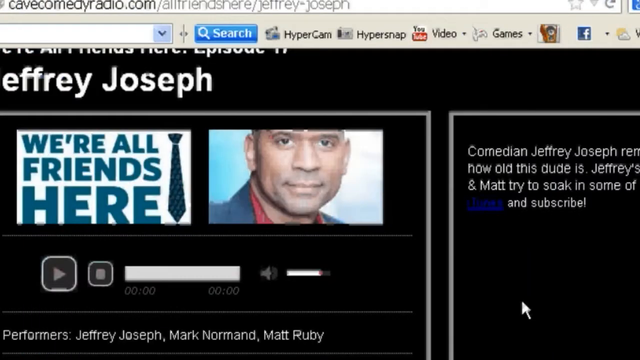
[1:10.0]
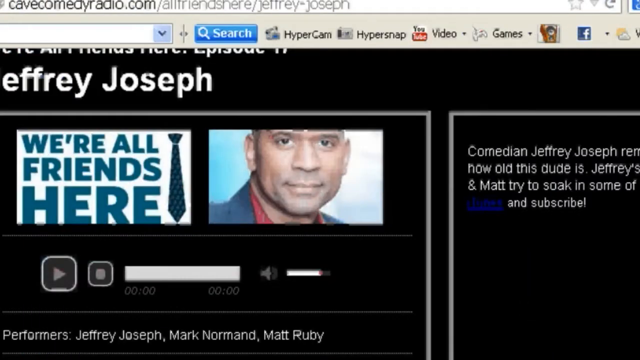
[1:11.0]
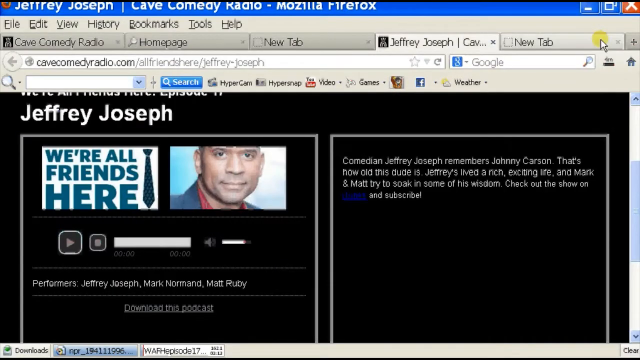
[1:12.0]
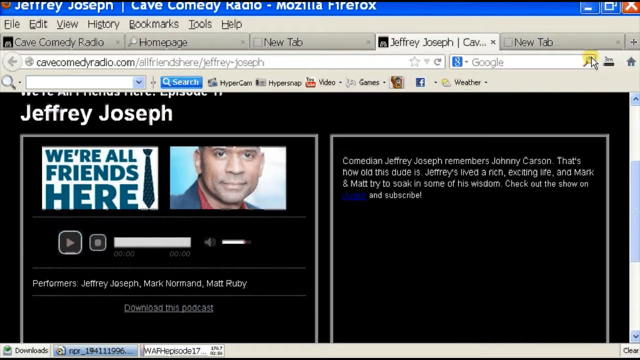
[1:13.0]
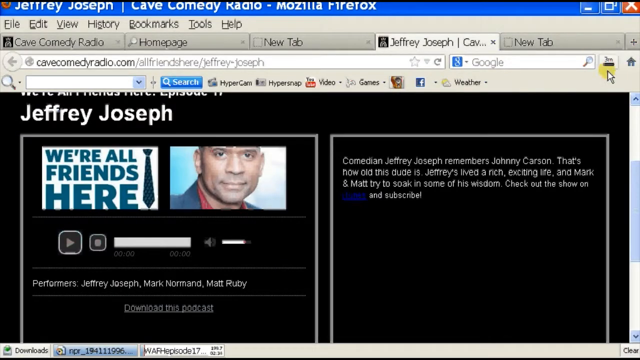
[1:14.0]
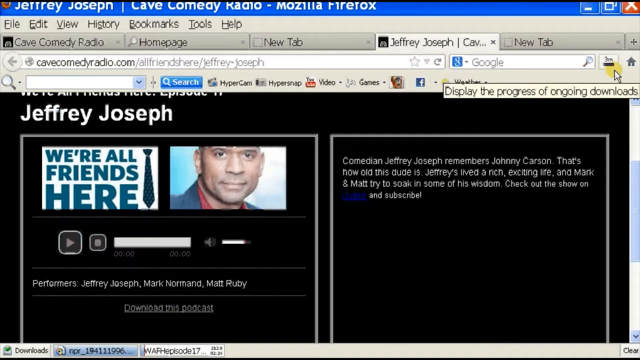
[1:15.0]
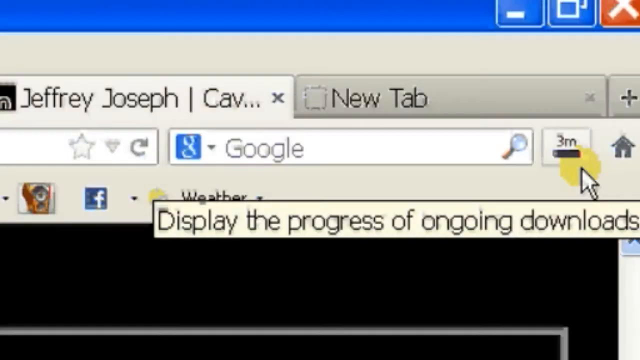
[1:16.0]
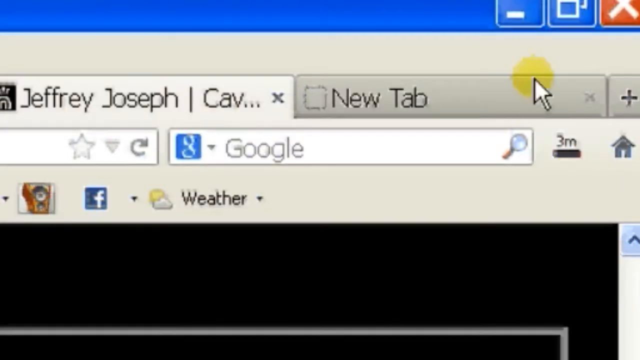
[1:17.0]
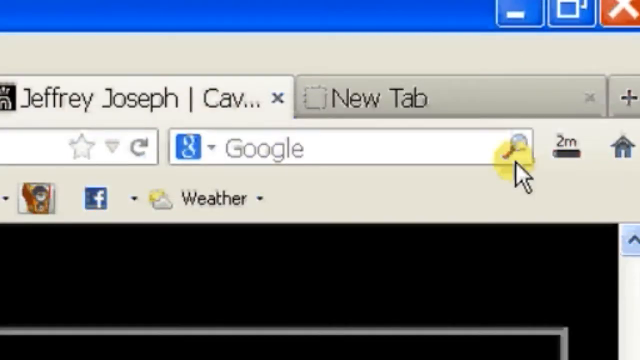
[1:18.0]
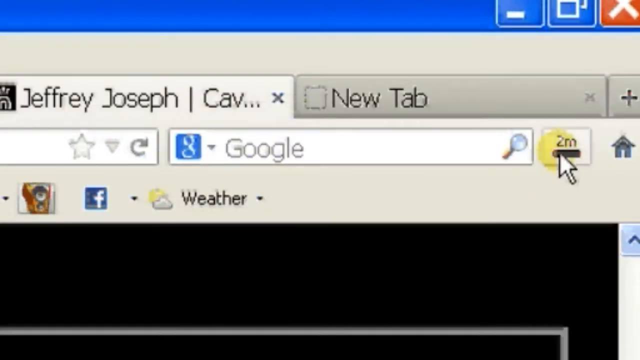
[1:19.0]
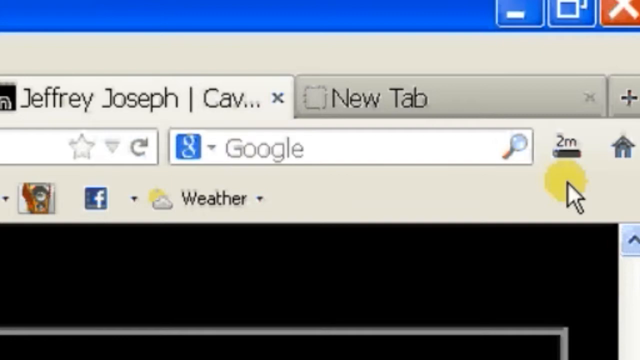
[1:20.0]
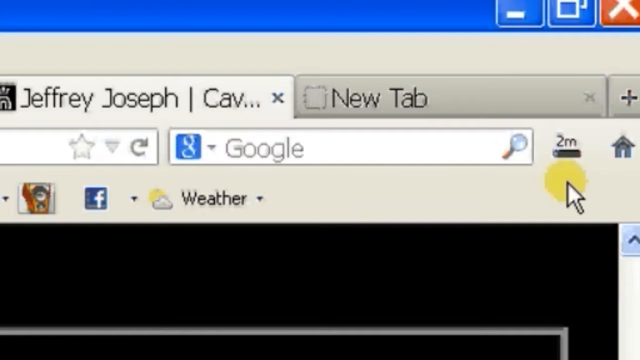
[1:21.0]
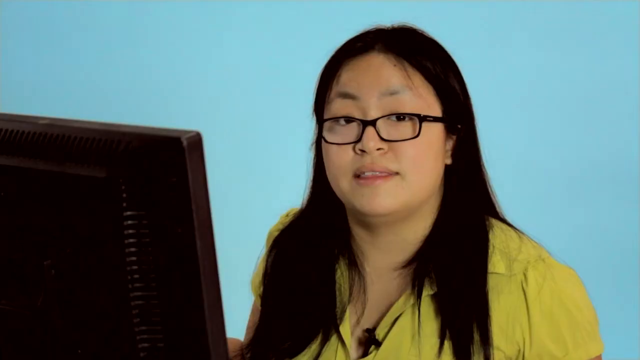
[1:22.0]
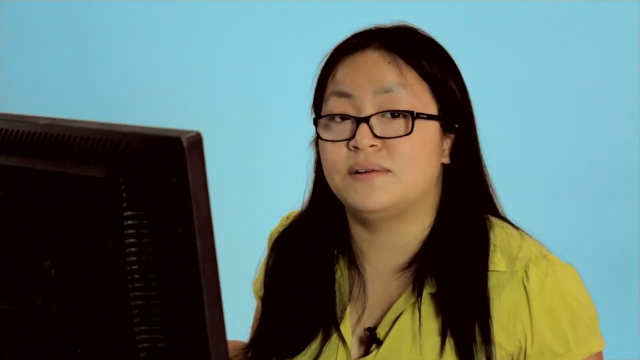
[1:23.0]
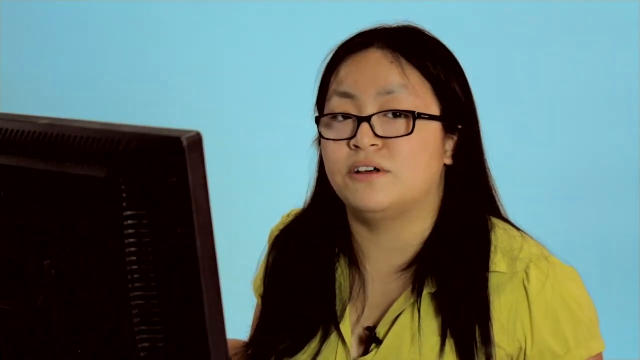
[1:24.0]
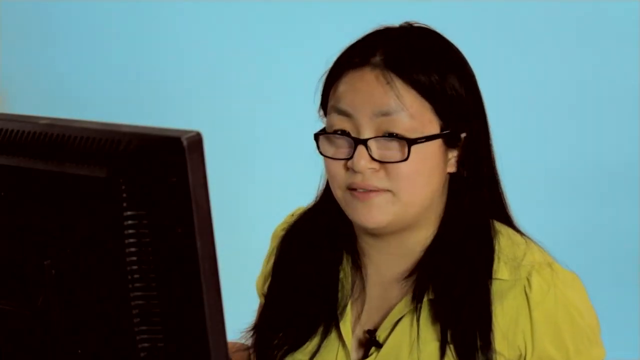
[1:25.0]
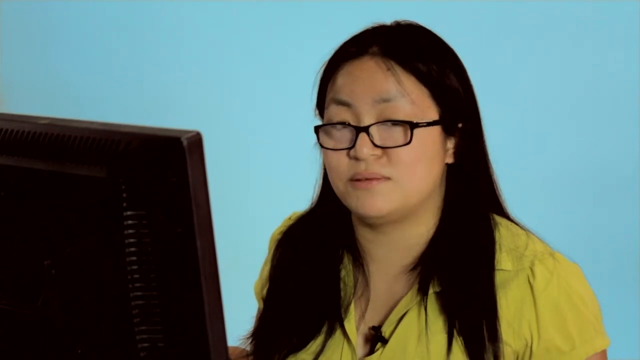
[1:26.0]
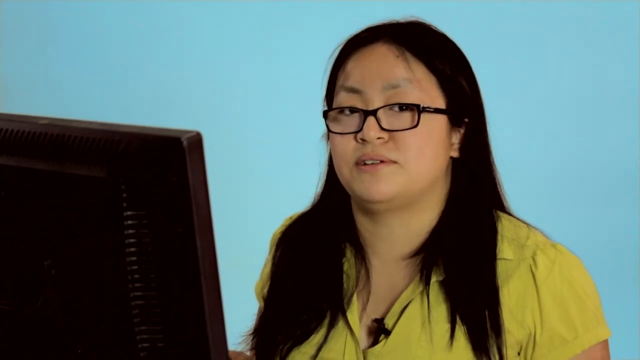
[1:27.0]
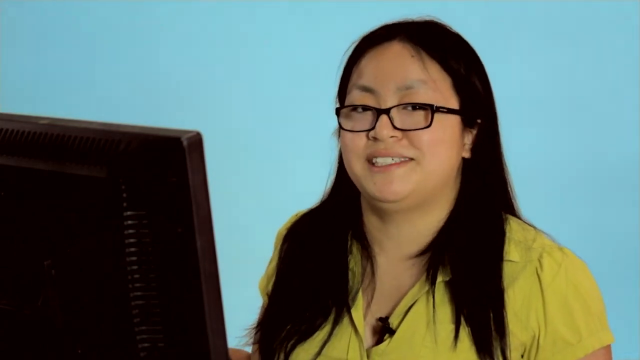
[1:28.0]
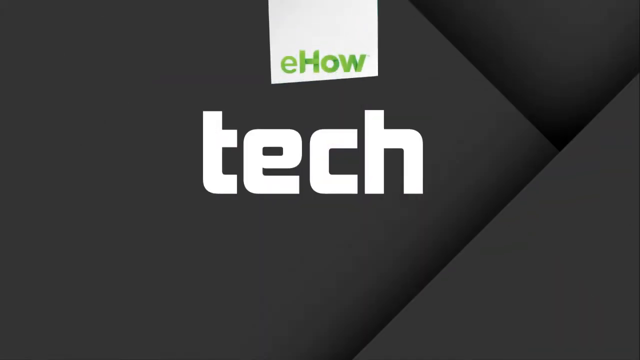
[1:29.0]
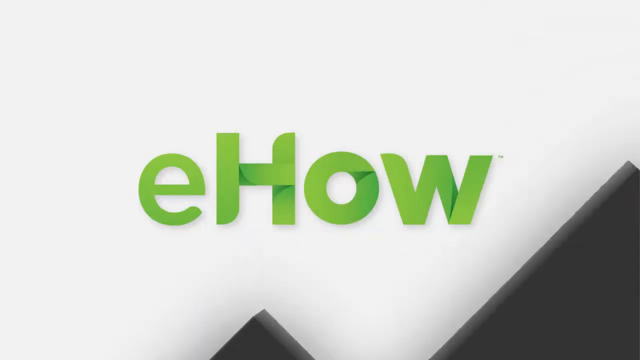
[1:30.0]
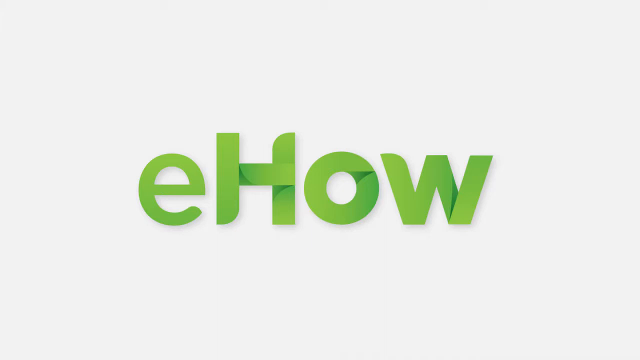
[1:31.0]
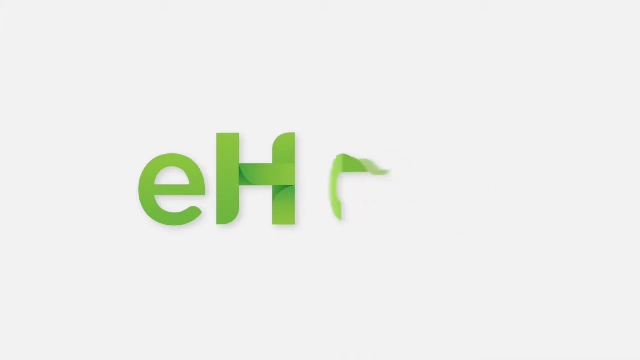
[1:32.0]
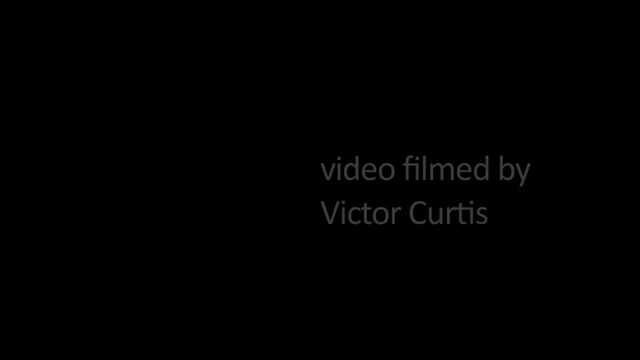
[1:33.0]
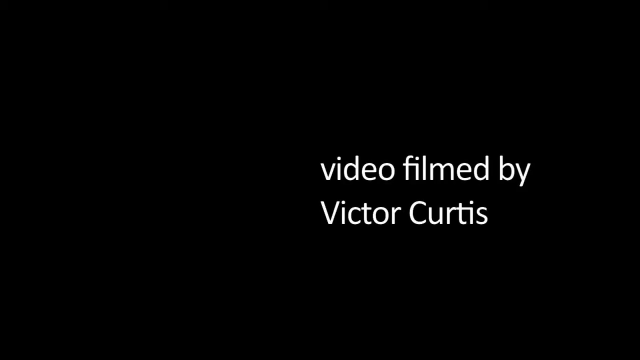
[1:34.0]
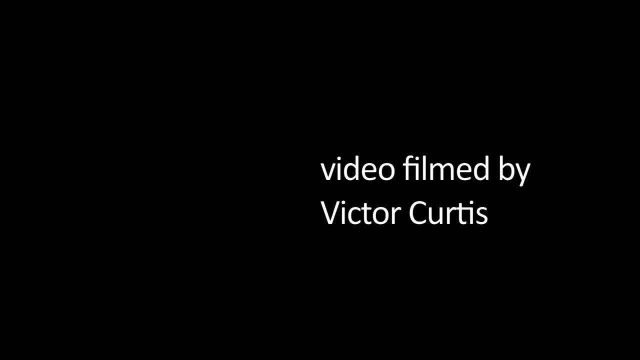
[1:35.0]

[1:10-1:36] The Jeffrey Joseph website, apparently for a comedian, is on screen, and the podcast has been downloaded or started downloading after download and save were clicked. In the upper right-hand corner, it shows two minutes left on saving the file. The video then returns to the live video of the web developer, who looks to be of Asian descent, with long black hair past her shoulders, a green shirt and black glasses, sitting in front of a computer. It then goes to an advertisement for ehow and tech. The computer seems to be running Windows 7.